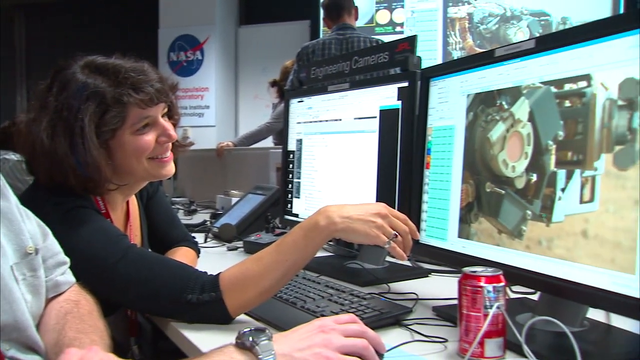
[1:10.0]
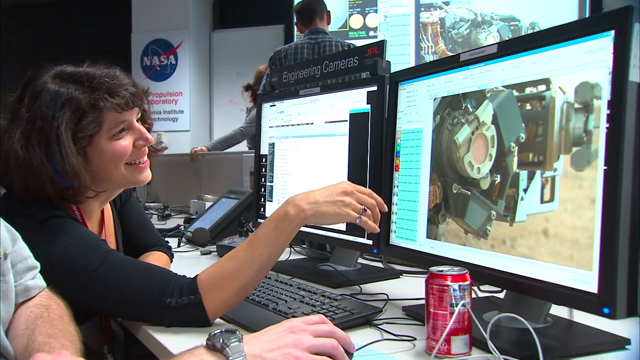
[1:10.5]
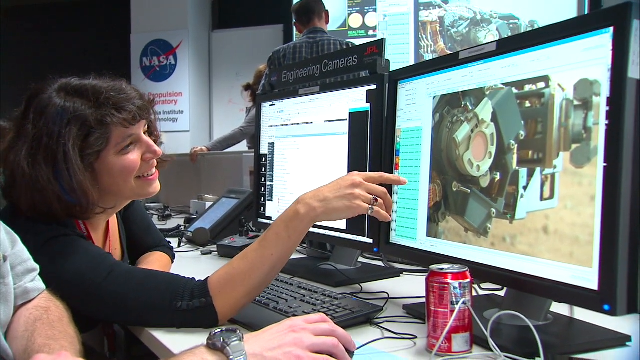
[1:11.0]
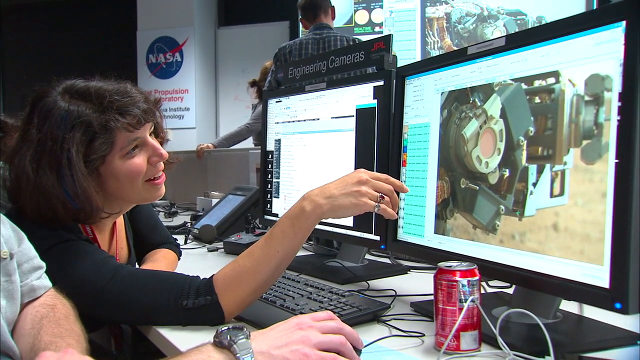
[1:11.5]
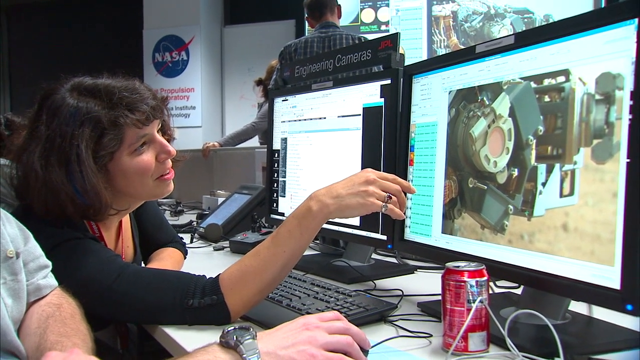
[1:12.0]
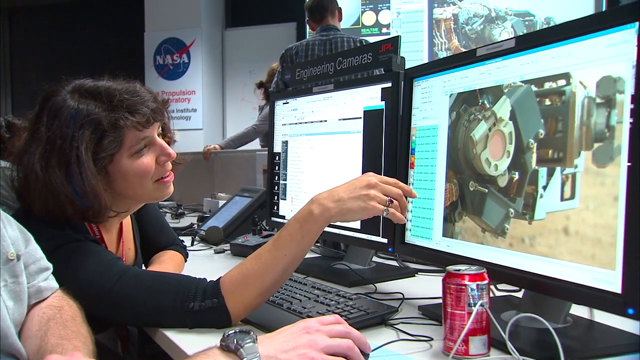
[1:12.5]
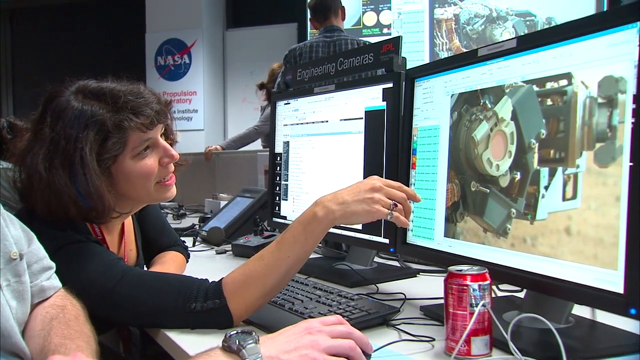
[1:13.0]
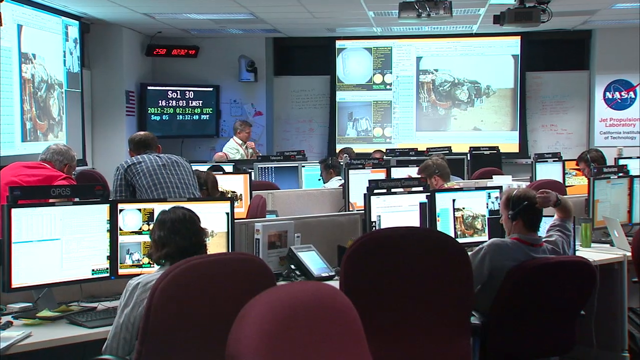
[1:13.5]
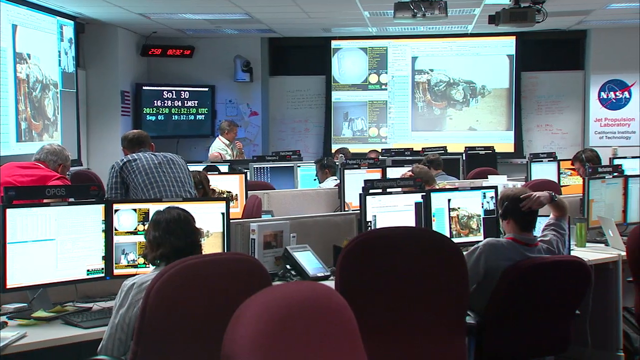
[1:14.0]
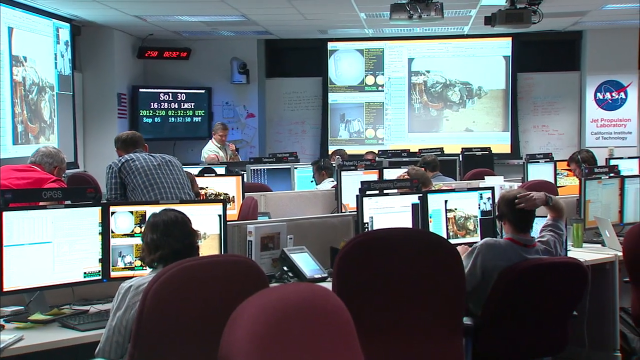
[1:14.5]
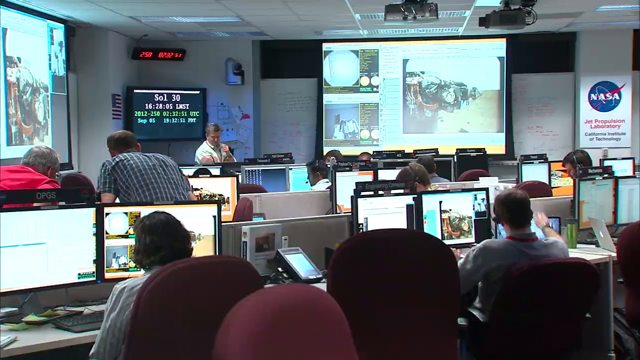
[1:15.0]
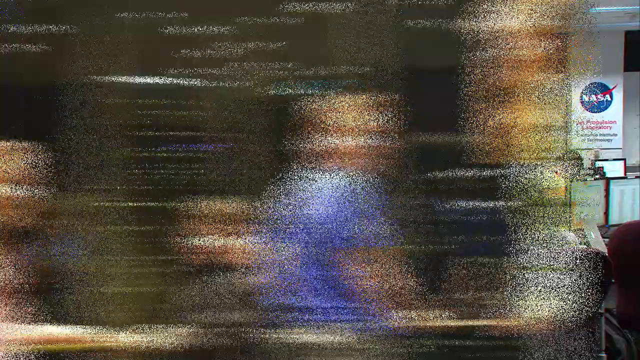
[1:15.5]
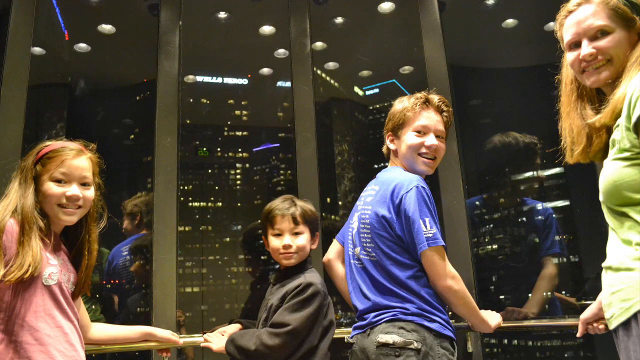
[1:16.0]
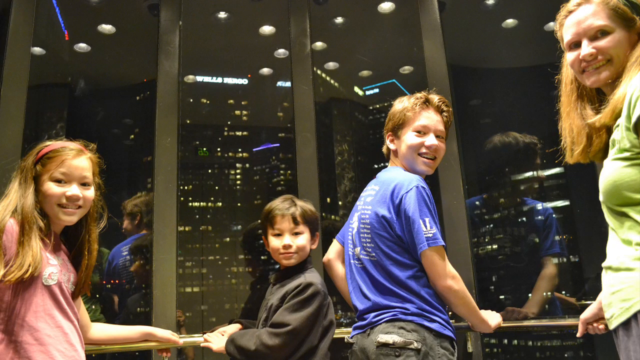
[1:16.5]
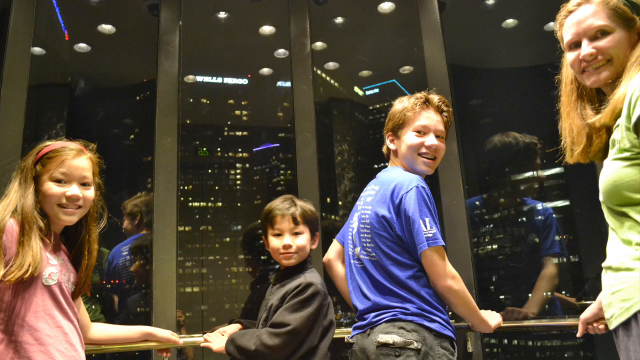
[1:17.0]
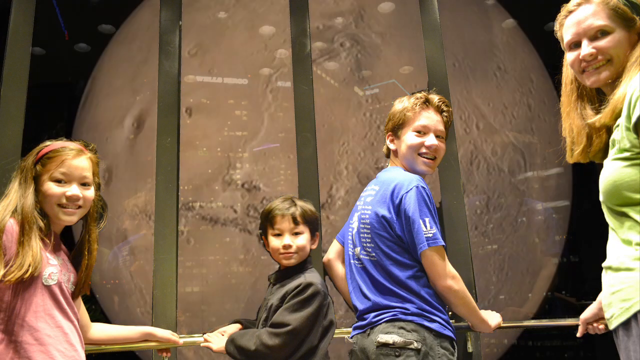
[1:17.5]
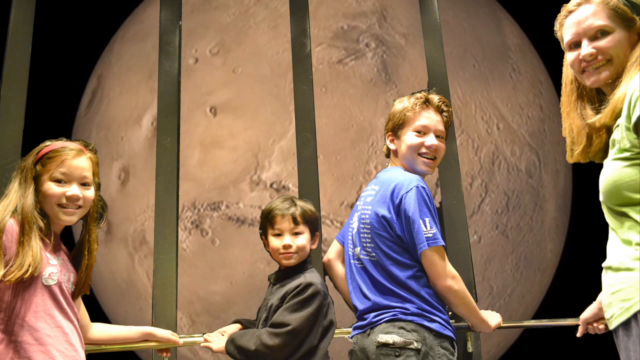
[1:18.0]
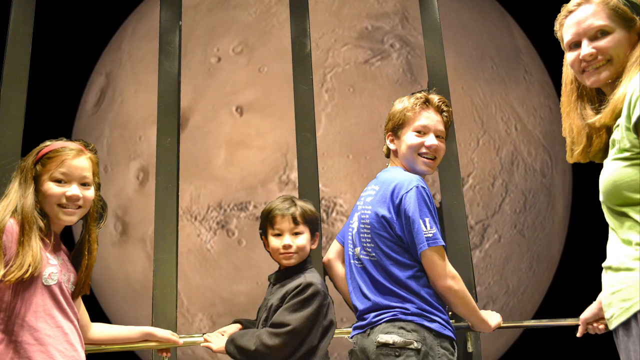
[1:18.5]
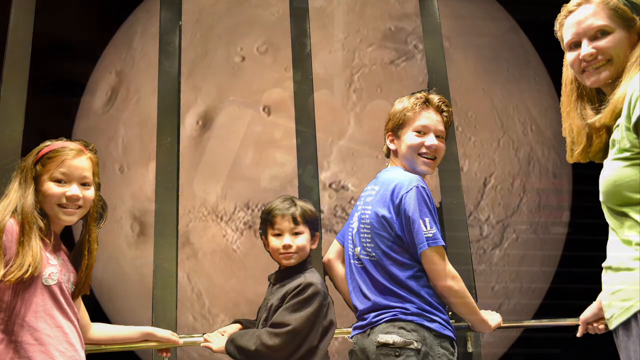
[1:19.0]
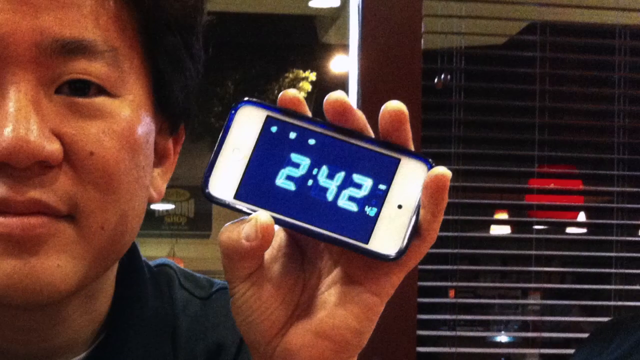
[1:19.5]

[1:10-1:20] A dark-haired woman with short hair, wearing a black three-quarter sleeve shirt, is on the left-hand side of the screen. She smiles at a computer screen as her right arm reaches out toward it; a red can of soda is in front of the screen, which shows a picture of the rover. As the camera pans, she looks more closely at the screen, points at something, and speaks. The view changes back to the broader view of the room with three rows of computers where scientists are working, with two large computers on the wall showing images of the rover. Next, four children sit in front of tall windows looking out over a cityscape. The girl on the left-hand side has long red hair, a younger Asian boy is in the center, a 13-year-old boy with short red hair is to the right, and an older child with longer red hair and a green shirt is to the left. They all look at the camera and smile. The image of the Martian planet spins.